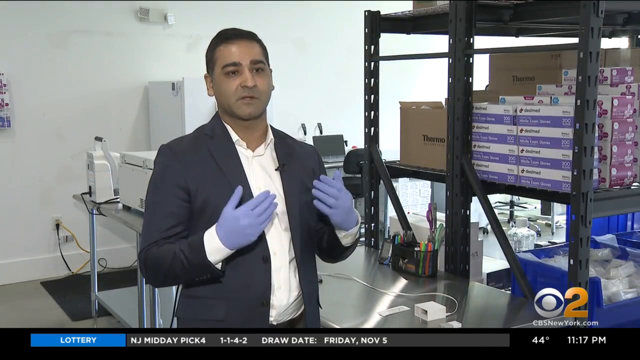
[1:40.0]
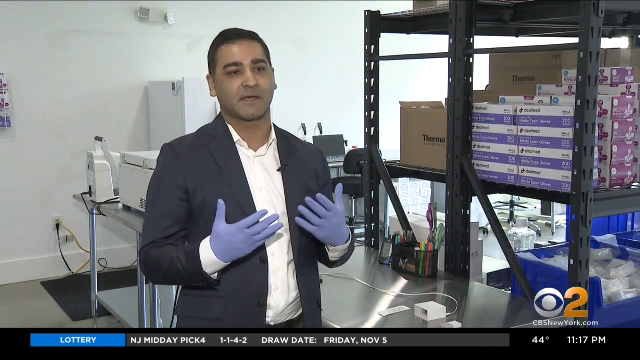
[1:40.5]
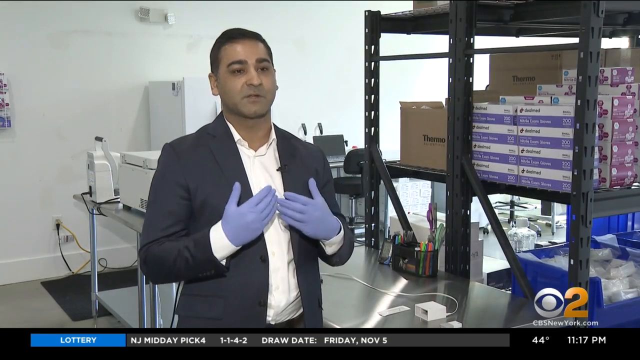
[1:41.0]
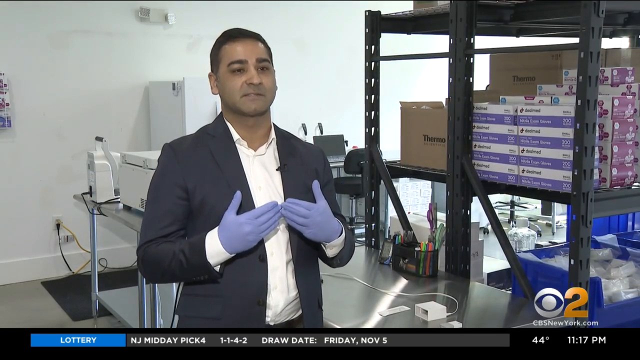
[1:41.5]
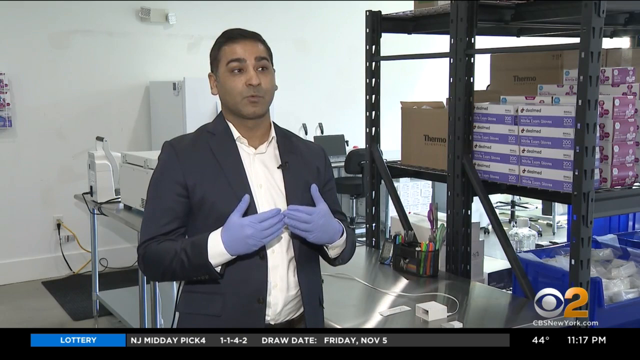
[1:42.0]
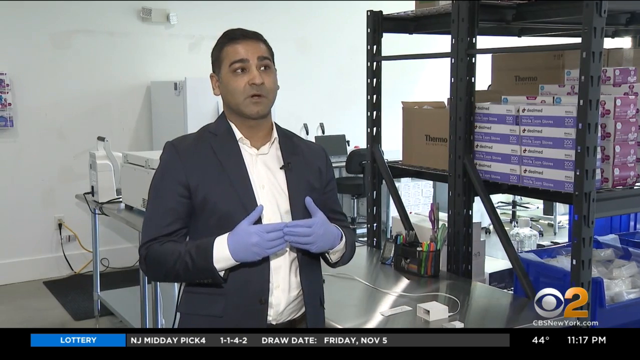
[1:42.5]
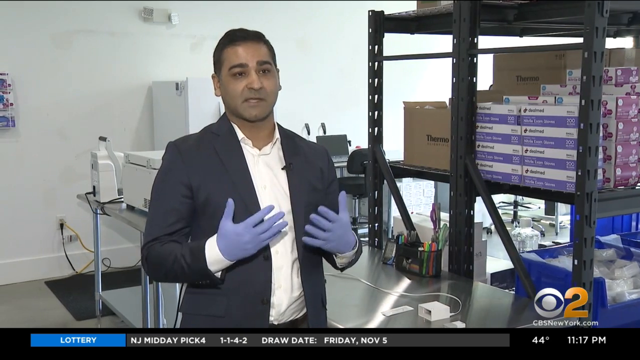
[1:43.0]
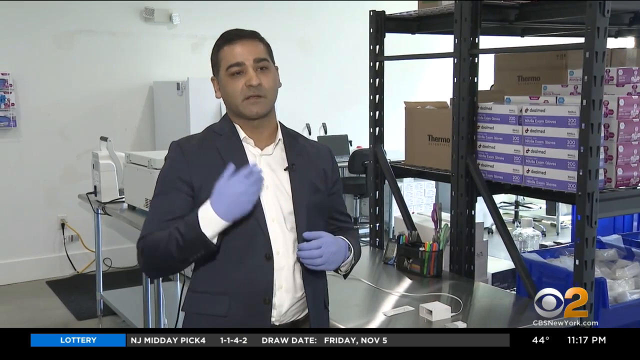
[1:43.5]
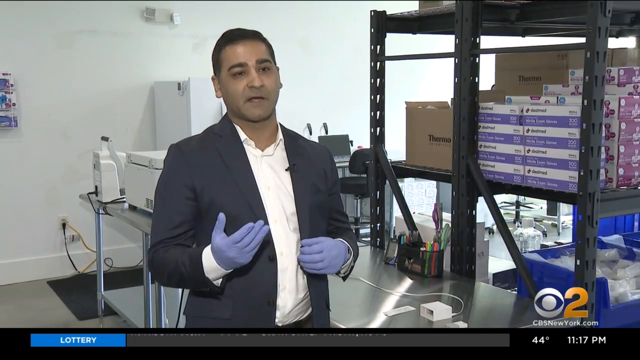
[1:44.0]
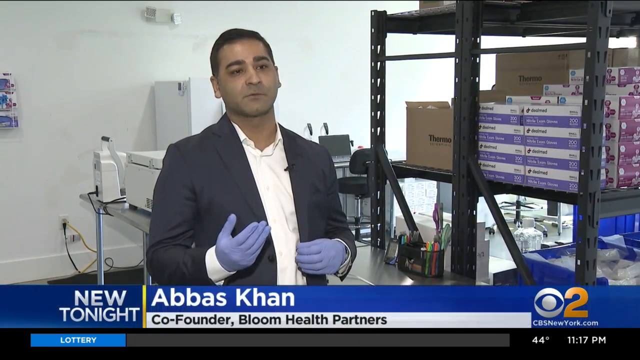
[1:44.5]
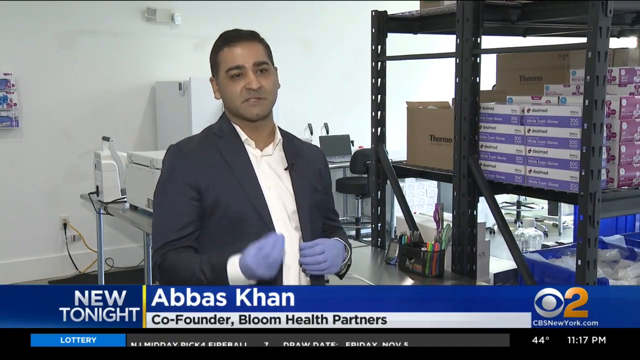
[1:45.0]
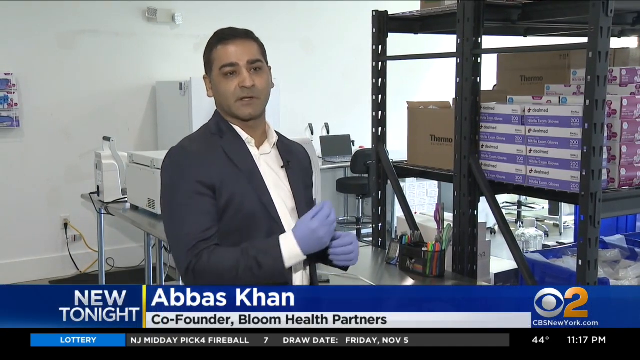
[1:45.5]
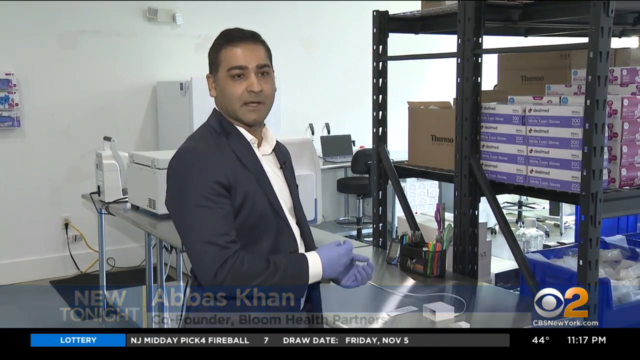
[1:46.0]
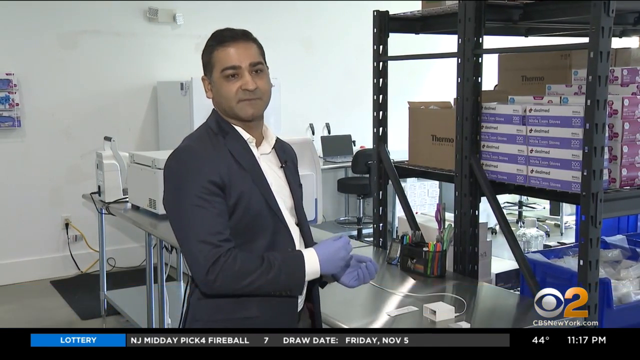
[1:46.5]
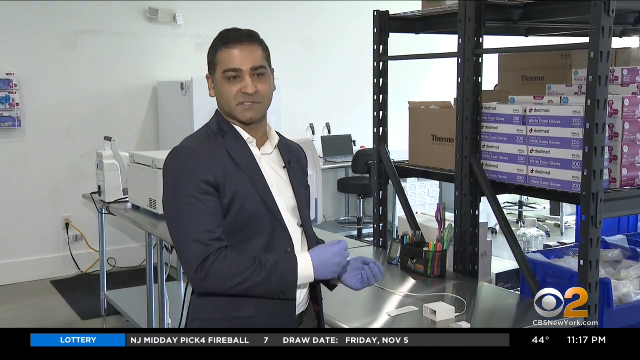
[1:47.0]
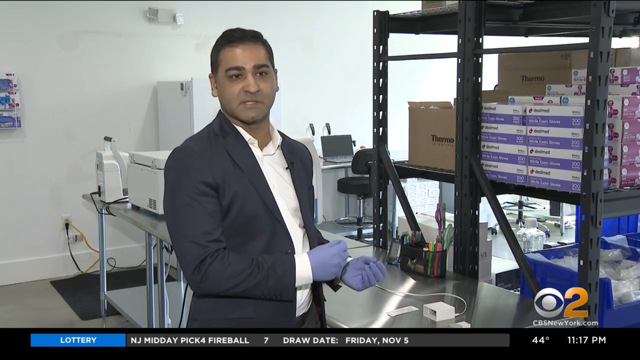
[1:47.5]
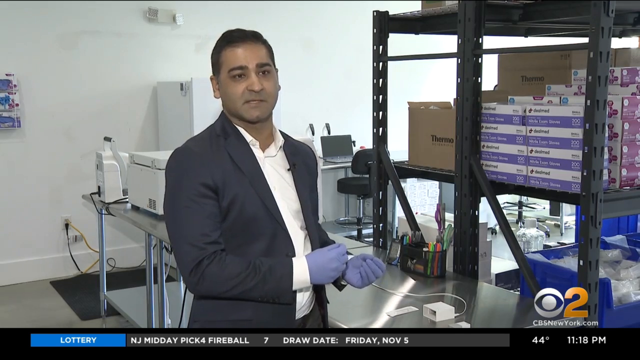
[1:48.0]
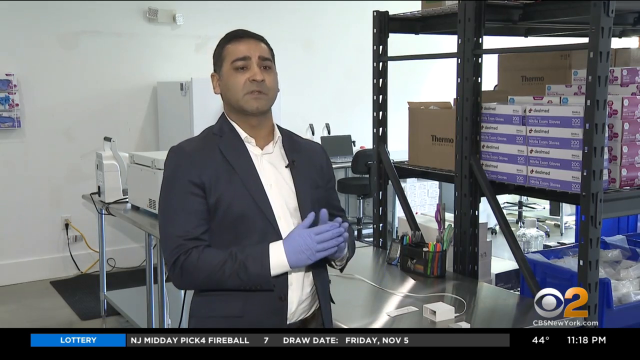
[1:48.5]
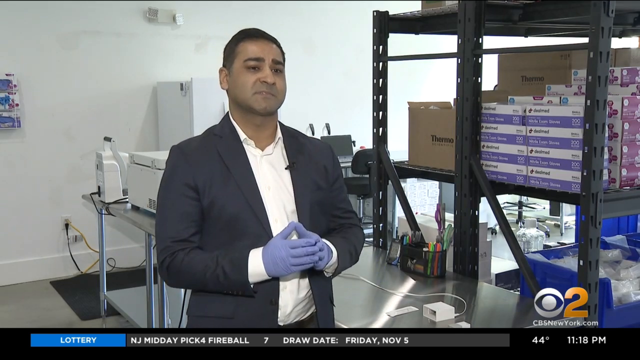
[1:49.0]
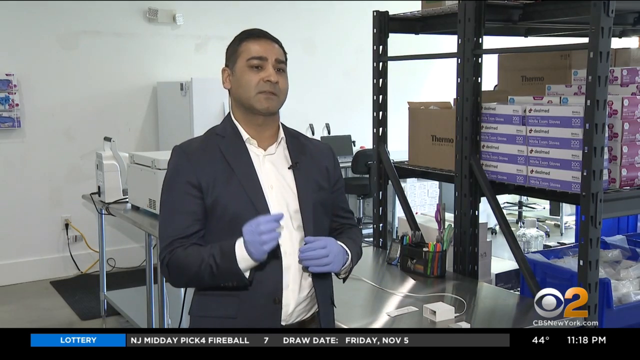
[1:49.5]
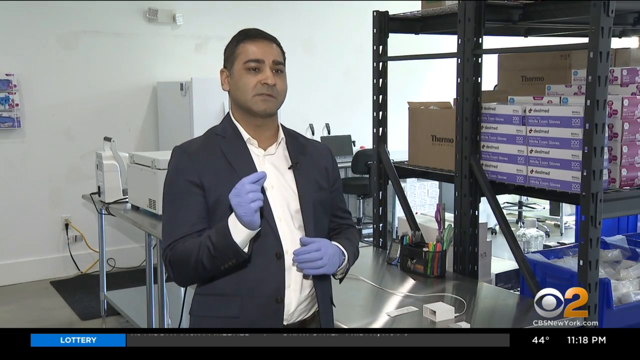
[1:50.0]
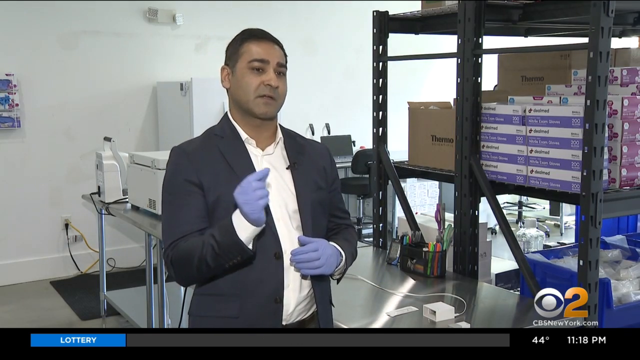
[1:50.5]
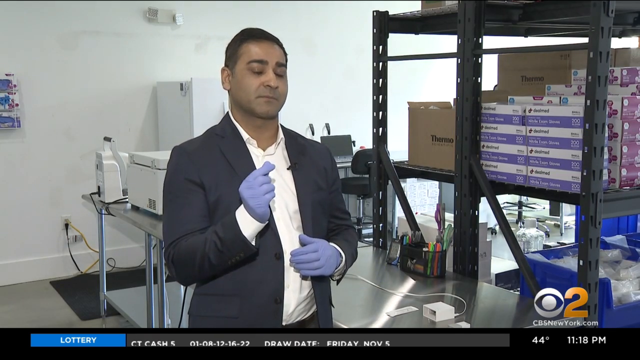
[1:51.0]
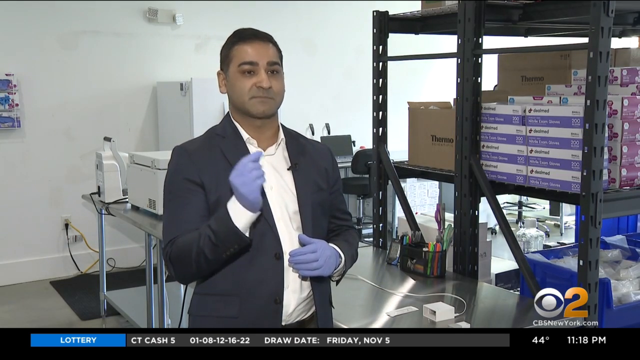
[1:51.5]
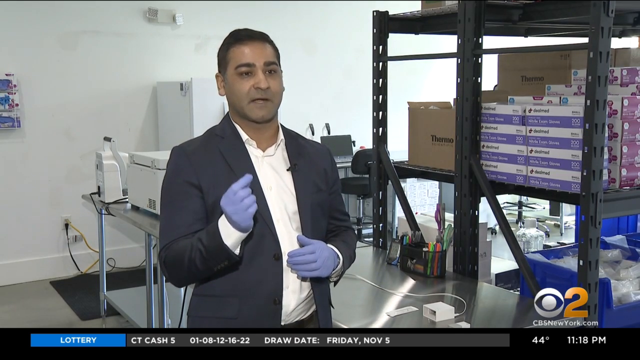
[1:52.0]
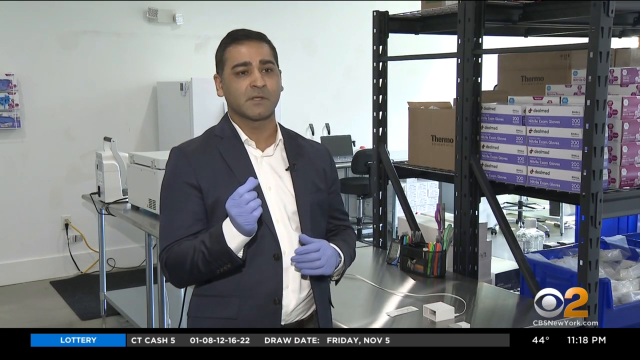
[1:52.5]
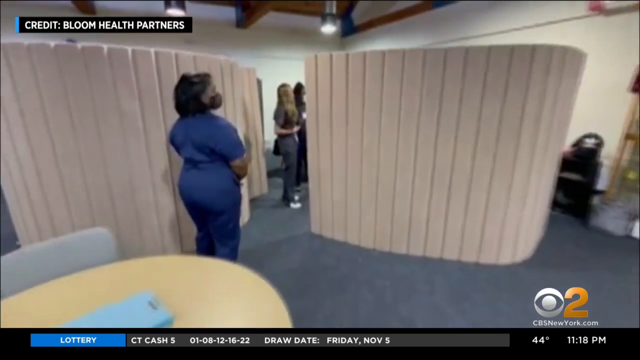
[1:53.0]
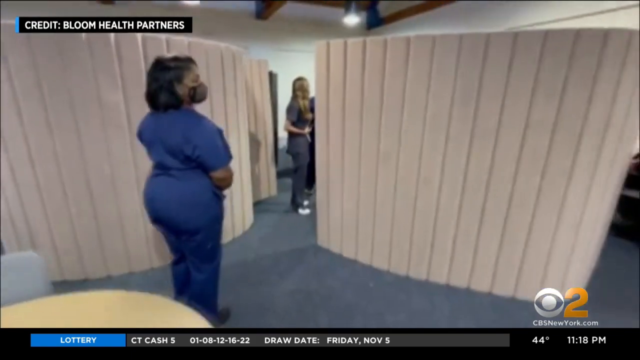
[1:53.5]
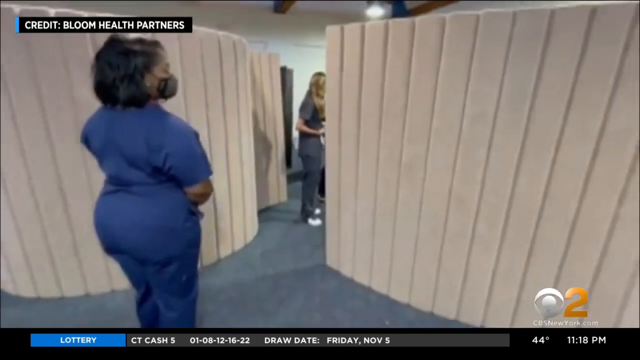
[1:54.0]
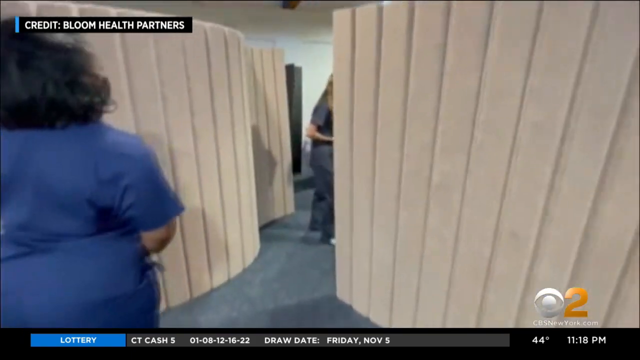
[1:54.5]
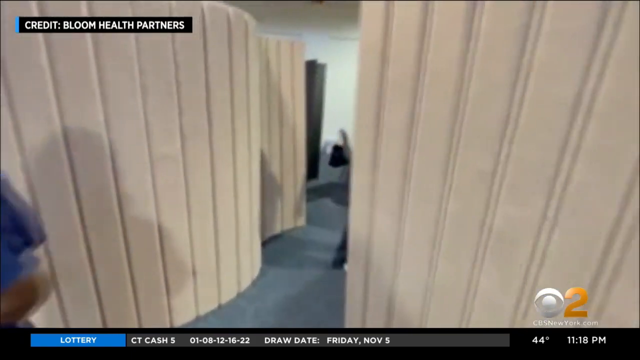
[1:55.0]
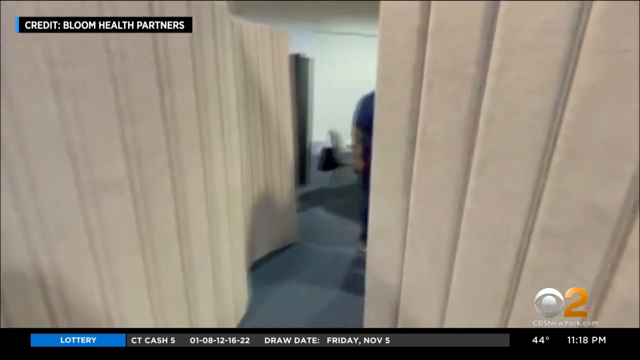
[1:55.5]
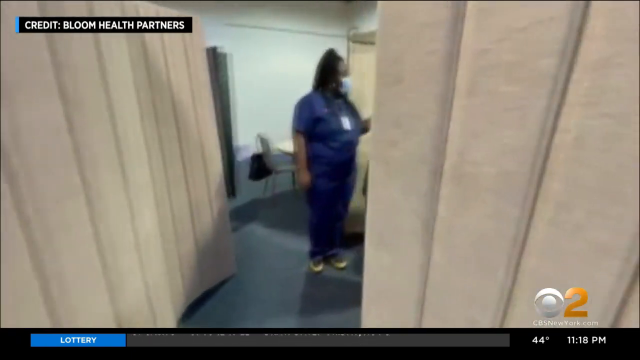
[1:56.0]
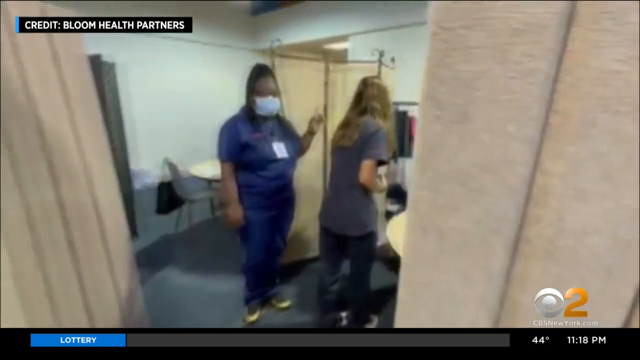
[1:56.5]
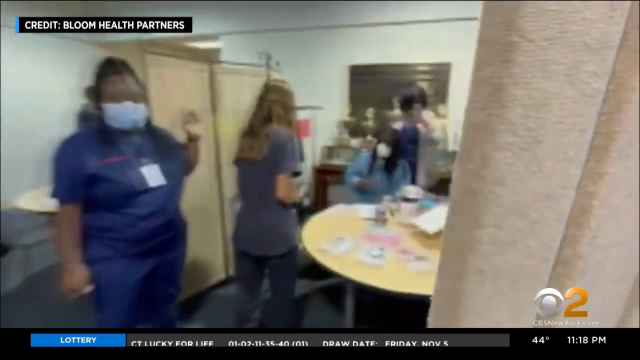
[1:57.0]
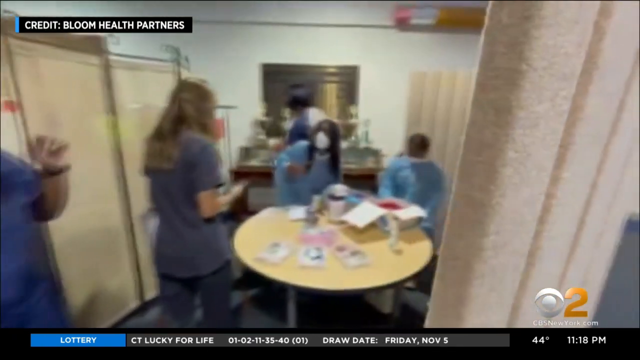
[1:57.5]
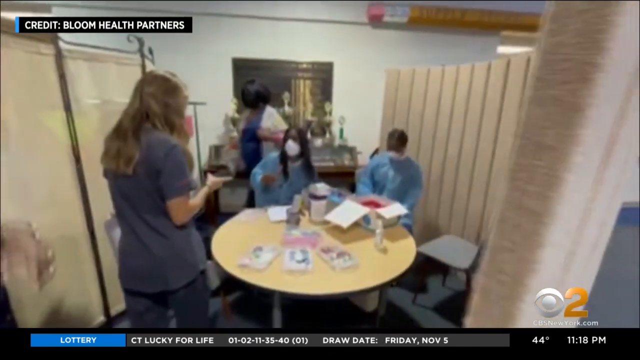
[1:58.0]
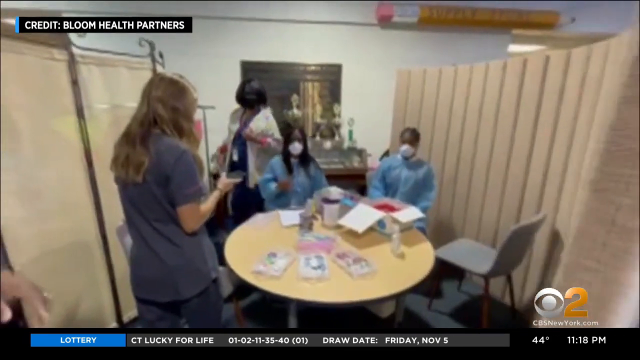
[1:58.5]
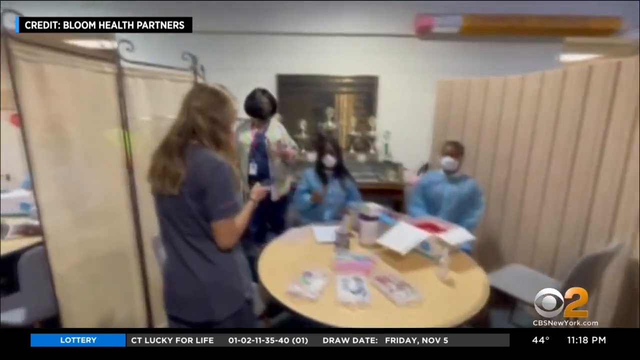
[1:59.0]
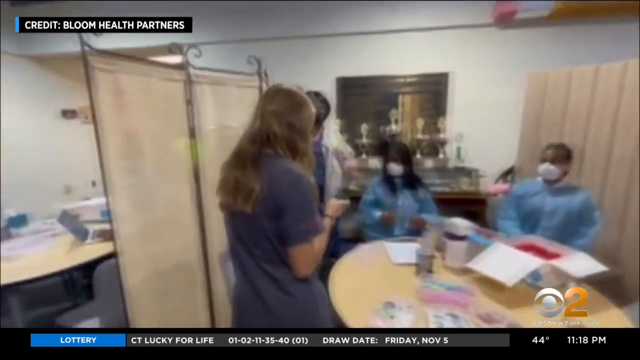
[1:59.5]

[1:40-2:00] The man stands next to multiple shelves holding many boxes of gloves. Numerous stacks of gloves are on the first shelf, with brown boxes behind them that say "Thermo." Wearing blue gloves, he talks to the camera while looking somewhat off to his left. Equipment is behind him, a yellow plug and a black plug are plugged into the wall, and a utensil holder is on the table to his right. The scene then changes to a room partitioned off with light brown partitions, containing tables and multiple people, including at least seven women who appear to be nurses or medical professionals, all wearing masks.